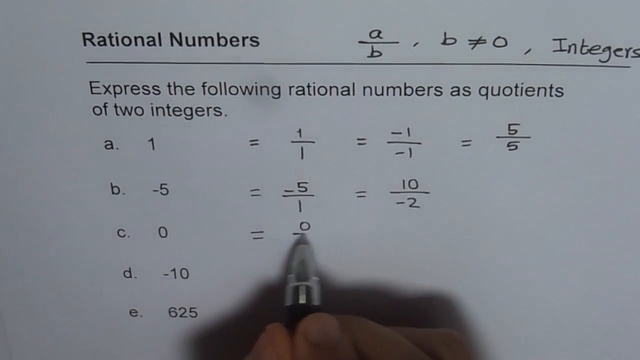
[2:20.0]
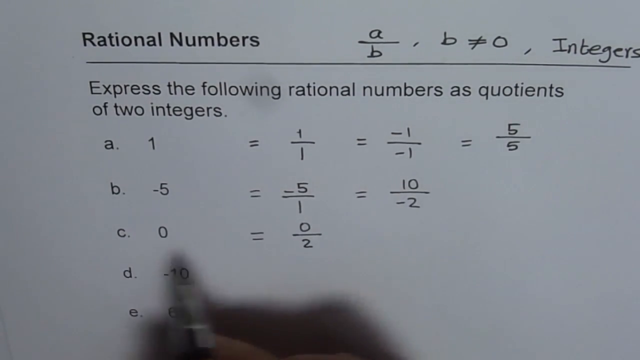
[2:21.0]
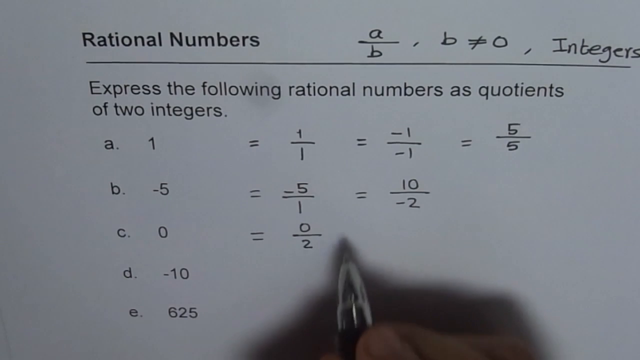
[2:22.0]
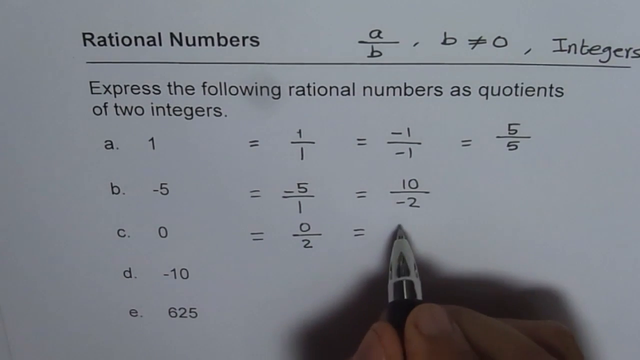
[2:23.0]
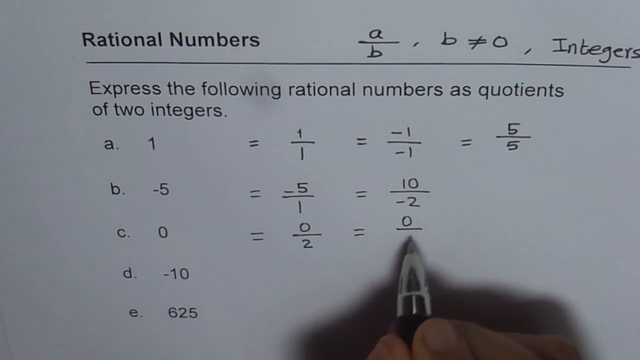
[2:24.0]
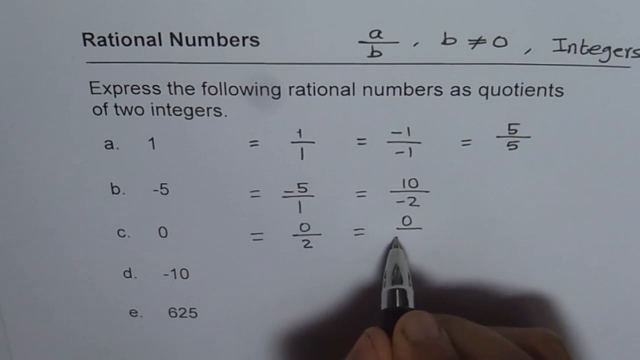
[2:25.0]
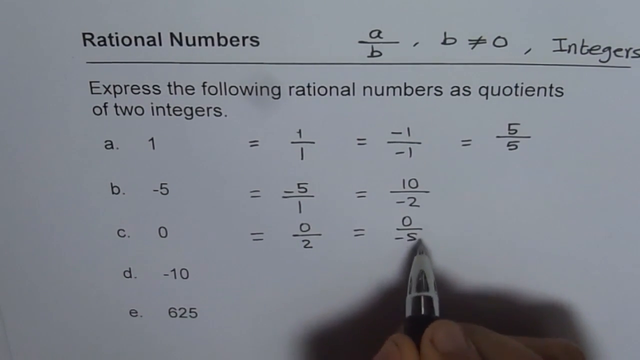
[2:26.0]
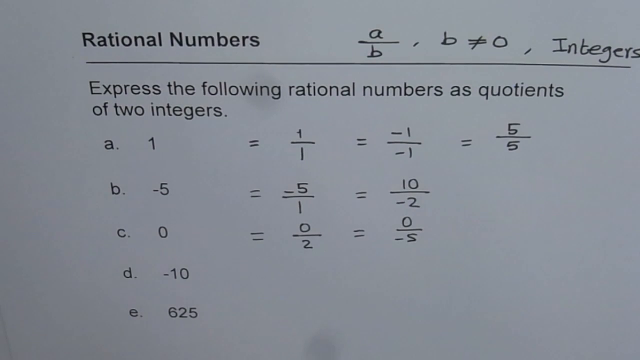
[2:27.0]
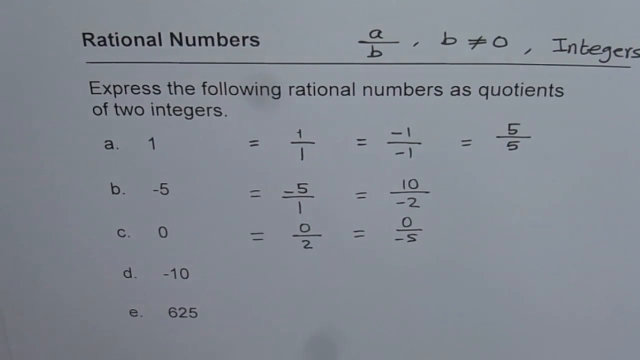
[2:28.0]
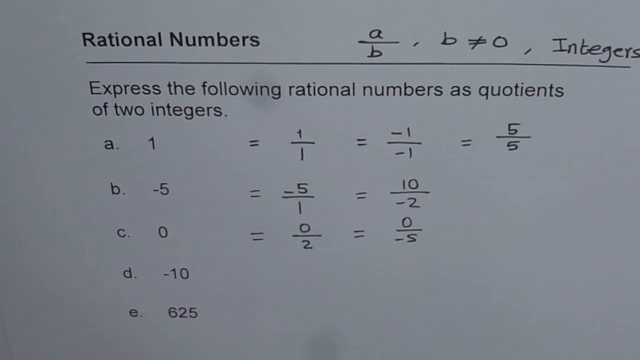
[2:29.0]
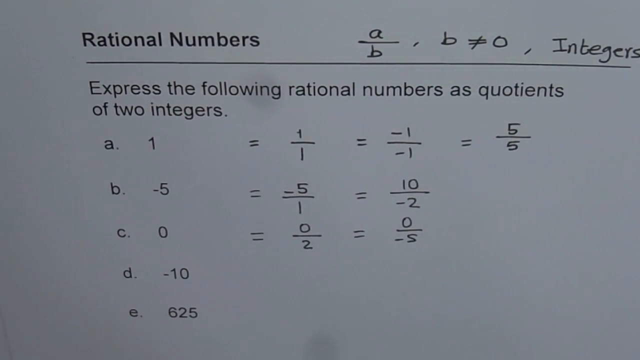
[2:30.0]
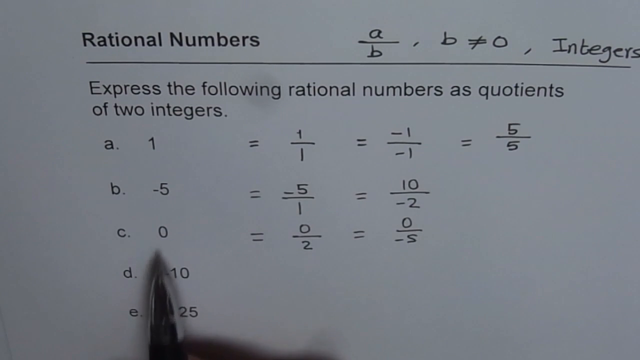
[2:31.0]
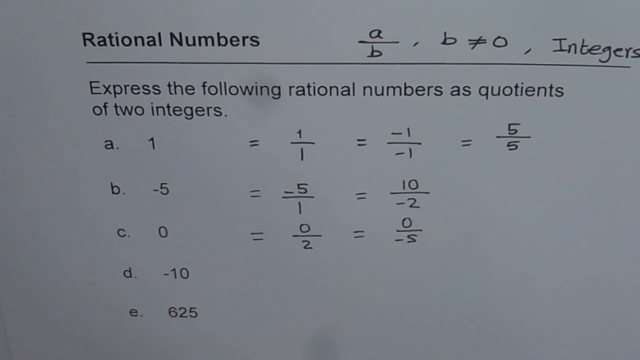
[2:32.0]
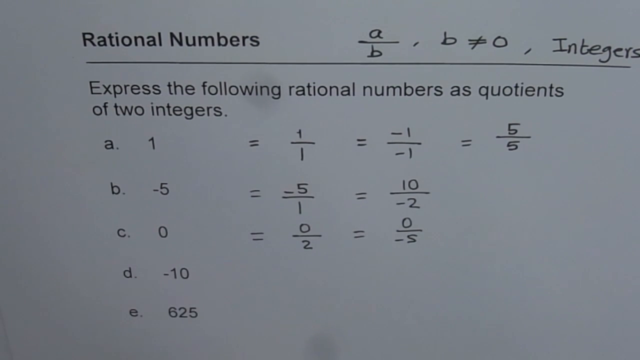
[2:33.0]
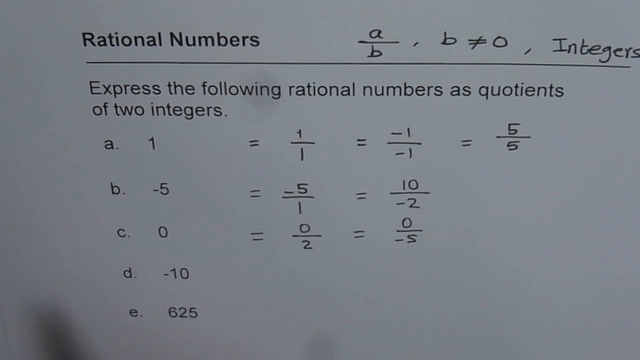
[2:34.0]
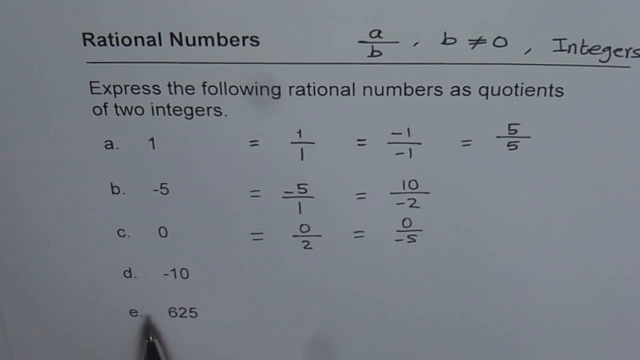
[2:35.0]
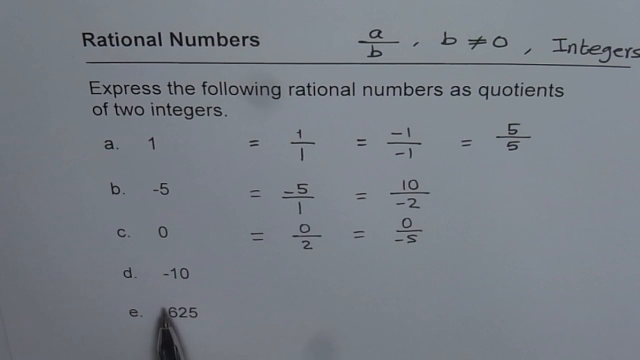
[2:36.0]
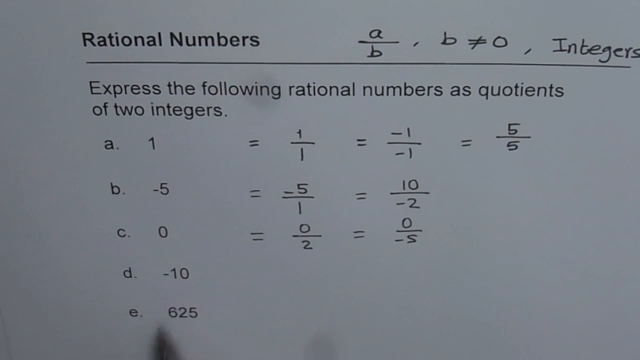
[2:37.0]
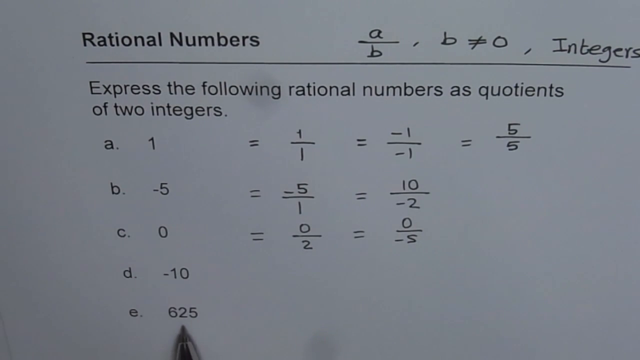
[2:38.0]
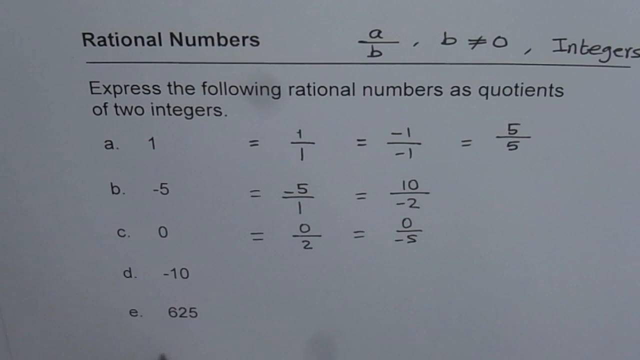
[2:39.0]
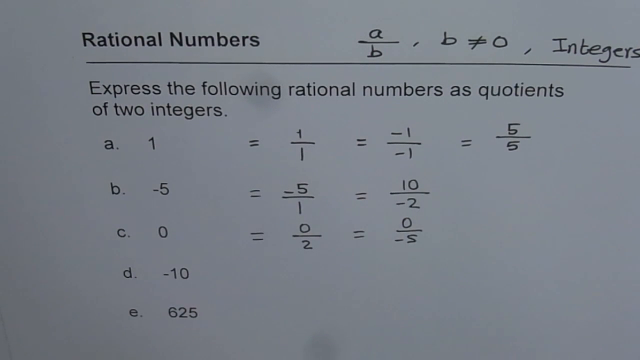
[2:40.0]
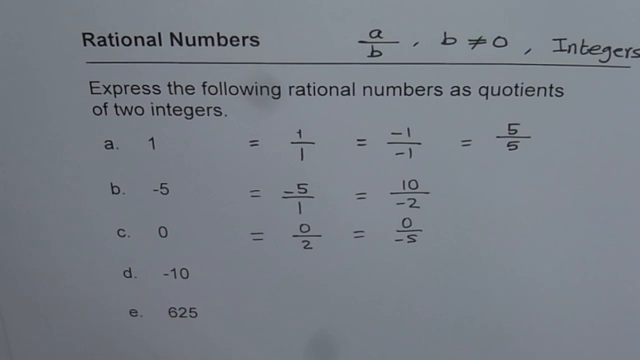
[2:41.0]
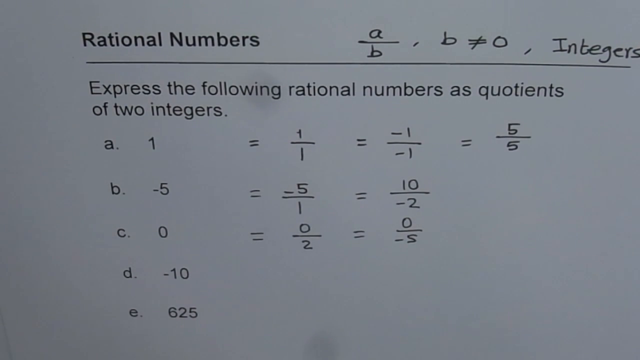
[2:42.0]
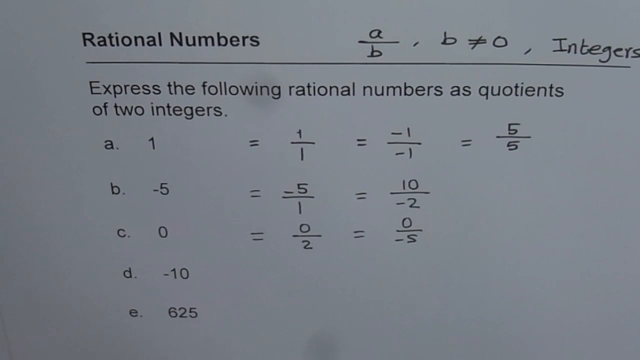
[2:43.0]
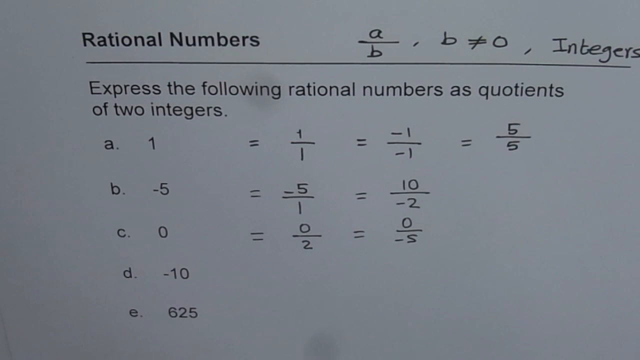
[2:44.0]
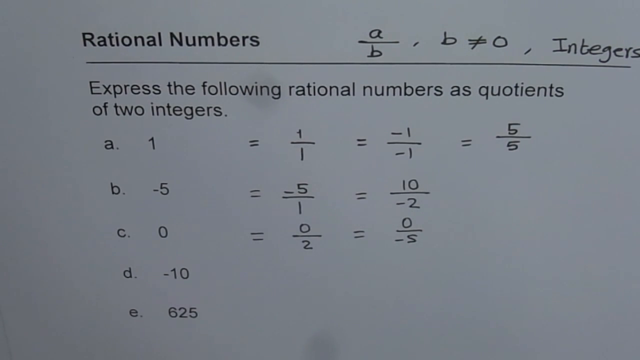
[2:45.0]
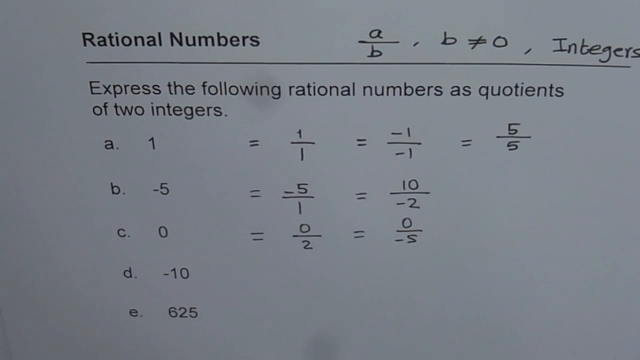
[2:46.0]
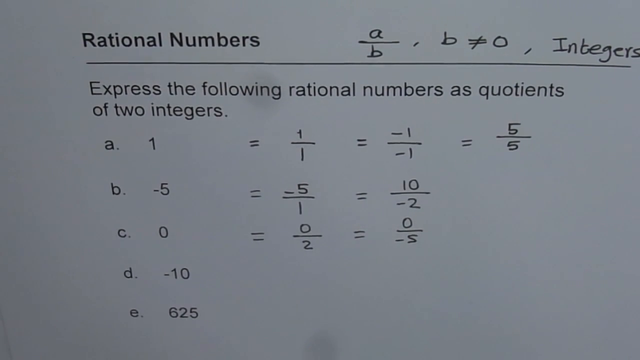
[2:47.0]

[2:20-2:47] The pen continues drawing the line underneath a zero, written to the right of an equals sign that is to the right of the "C. 0" item. He has written zero over two, and the hand withdraws toward the bottom of the screen. It almost immediately enters again, with only the silver tip of the pen and a little of the index finger and thumb holding it visible. He writes an equals sign and then zero over minus five. Each time he writes something, he points back with the pen and taps the number at the beginning of the line that he is working on. He taps the zero again and moves the pen out of view. He then makes an underlining gesture underneath the minus 10, but does nothing further, and the hand stays off the screen toward the bottom.